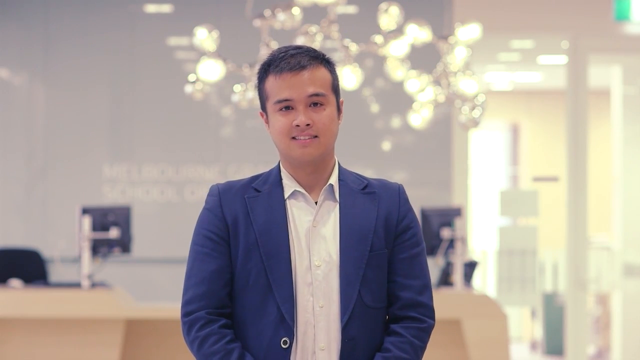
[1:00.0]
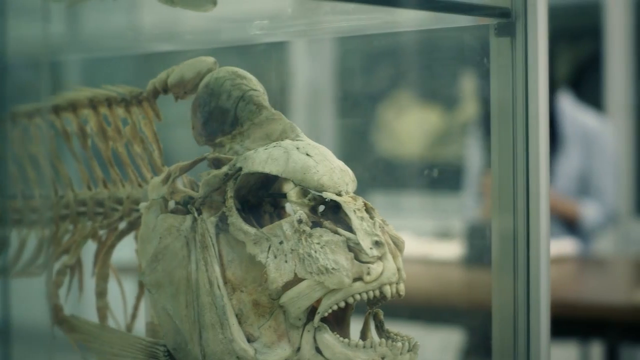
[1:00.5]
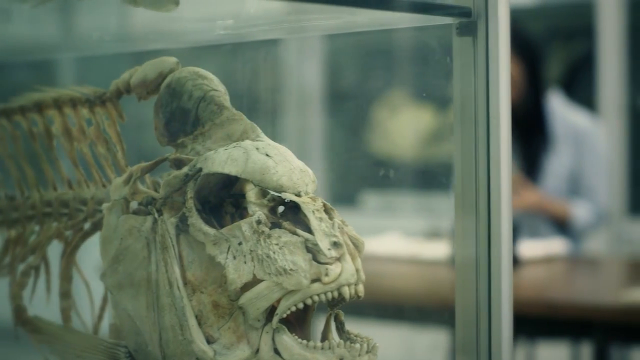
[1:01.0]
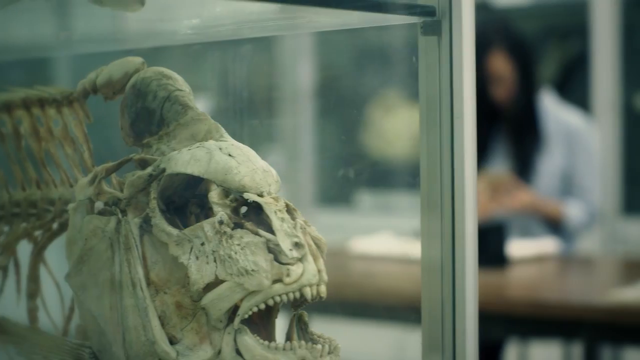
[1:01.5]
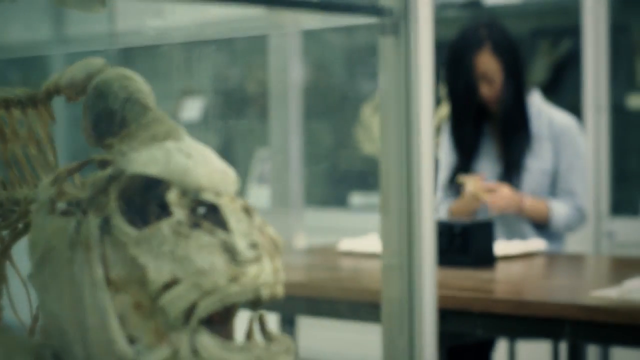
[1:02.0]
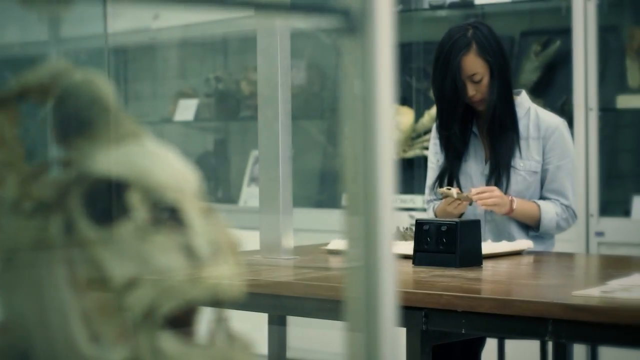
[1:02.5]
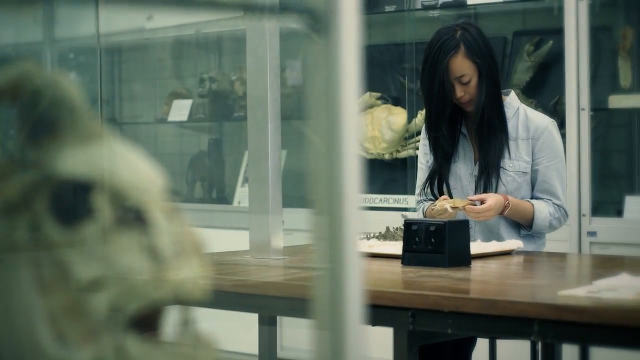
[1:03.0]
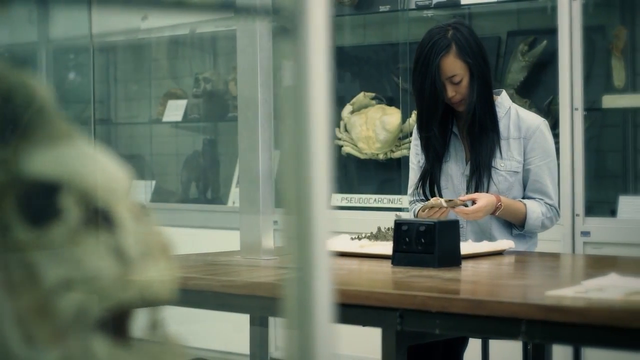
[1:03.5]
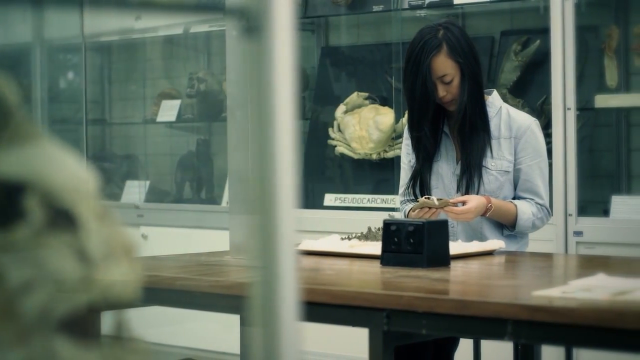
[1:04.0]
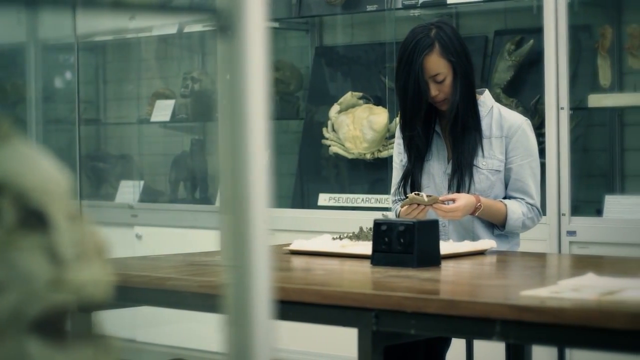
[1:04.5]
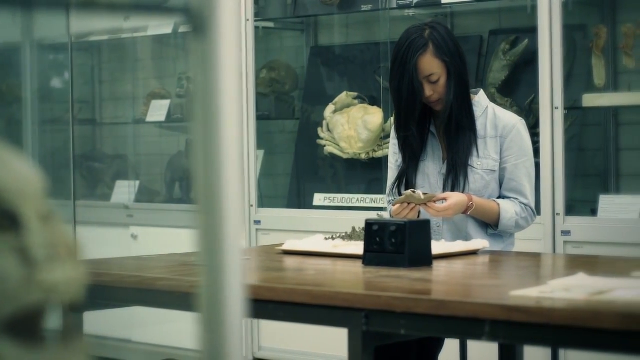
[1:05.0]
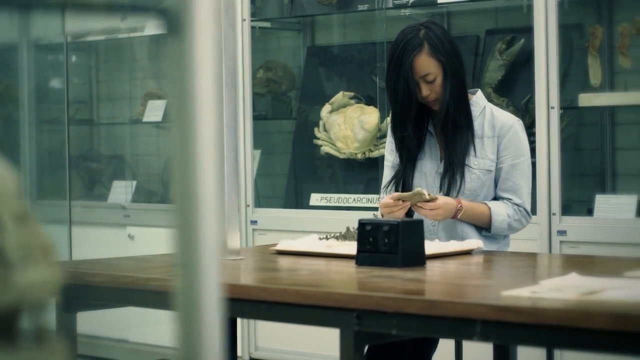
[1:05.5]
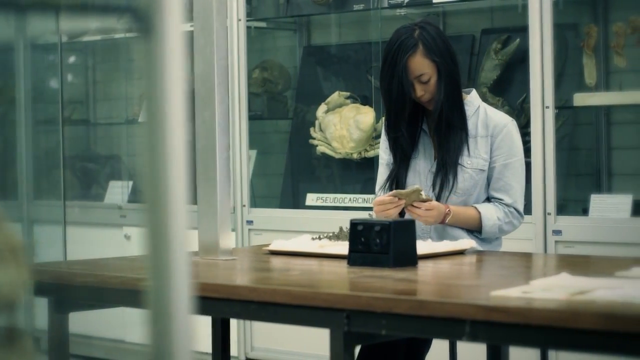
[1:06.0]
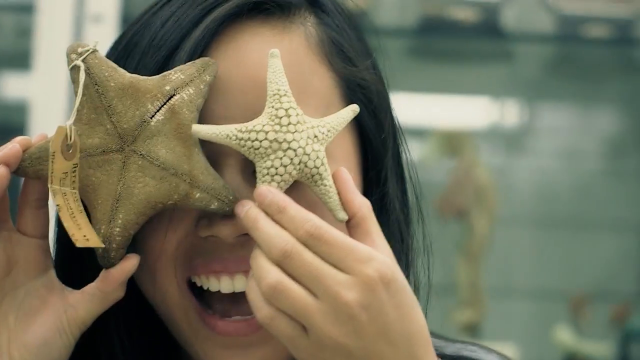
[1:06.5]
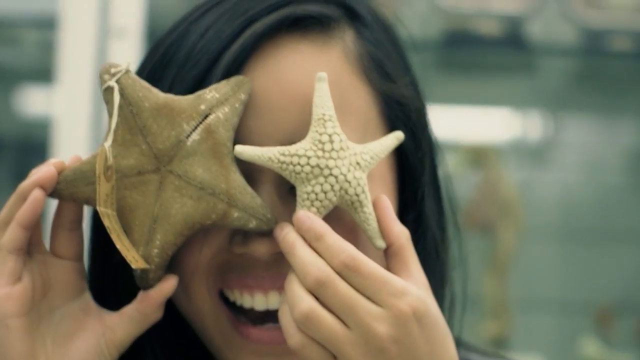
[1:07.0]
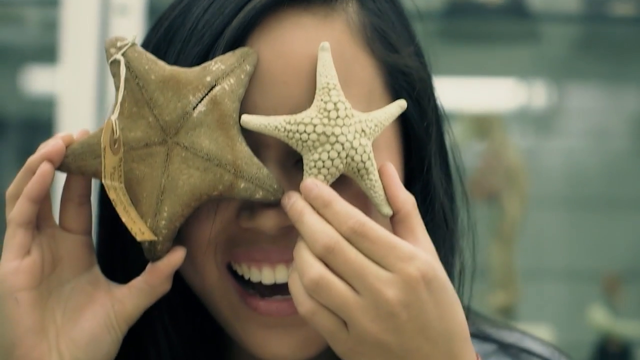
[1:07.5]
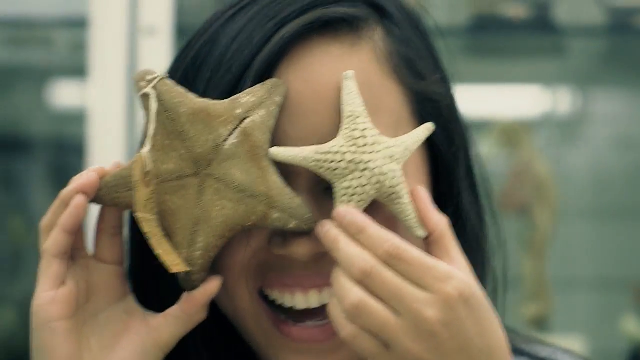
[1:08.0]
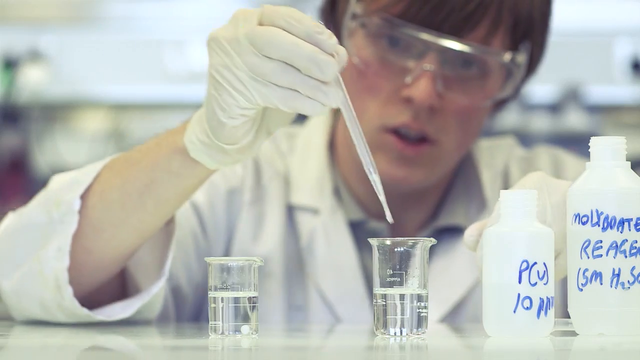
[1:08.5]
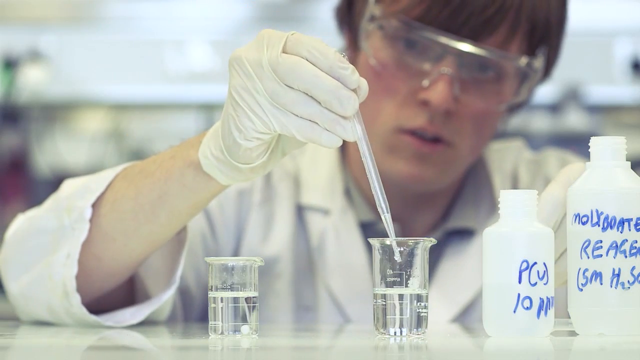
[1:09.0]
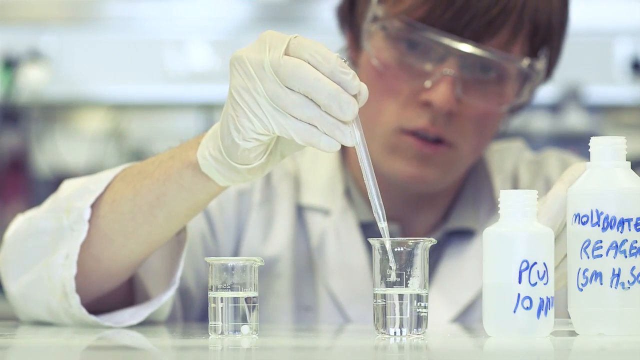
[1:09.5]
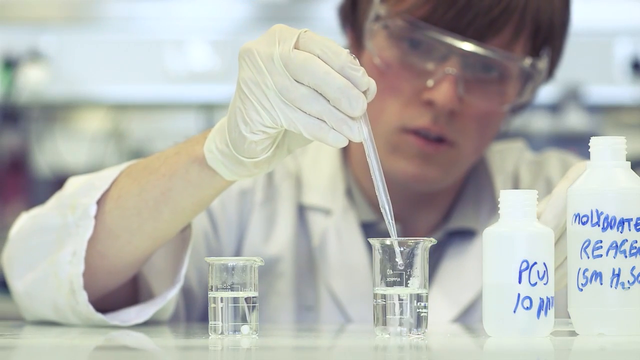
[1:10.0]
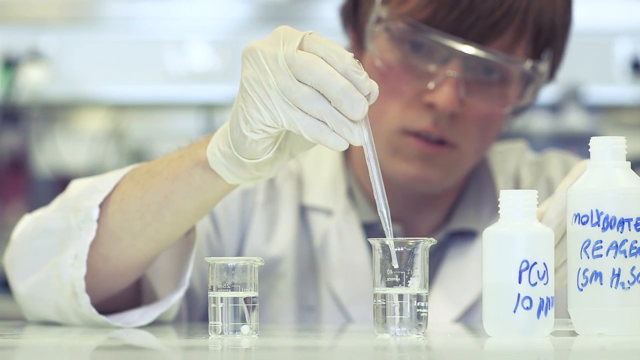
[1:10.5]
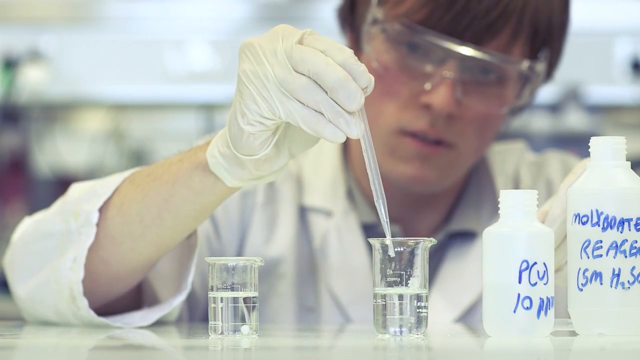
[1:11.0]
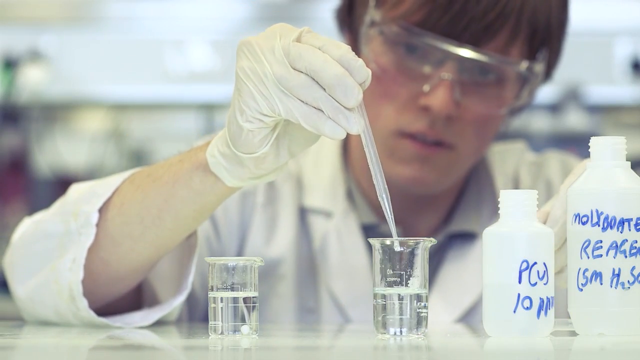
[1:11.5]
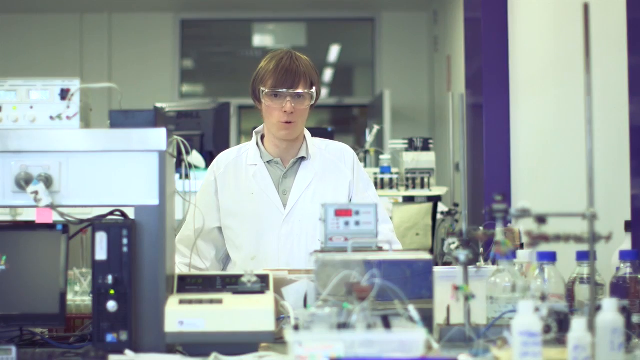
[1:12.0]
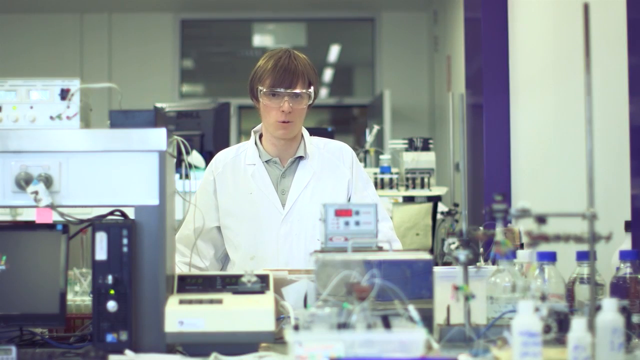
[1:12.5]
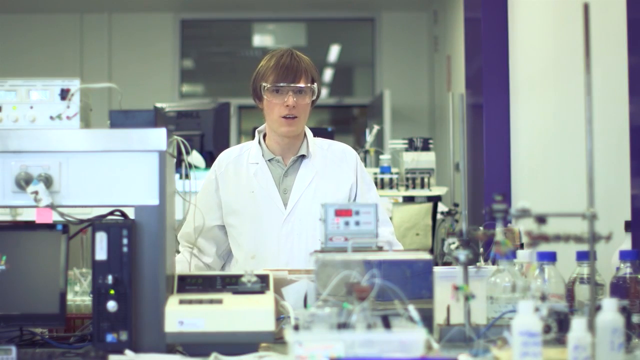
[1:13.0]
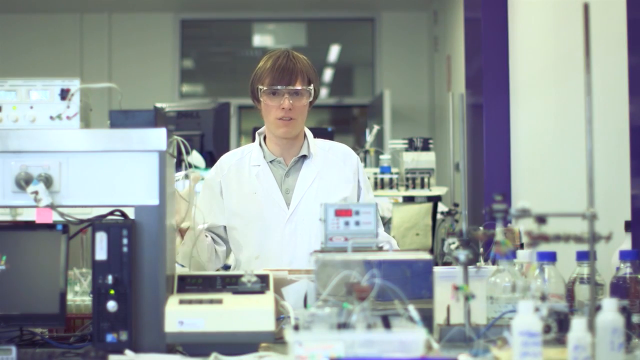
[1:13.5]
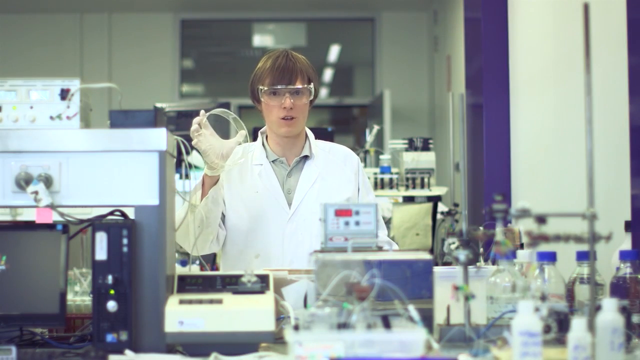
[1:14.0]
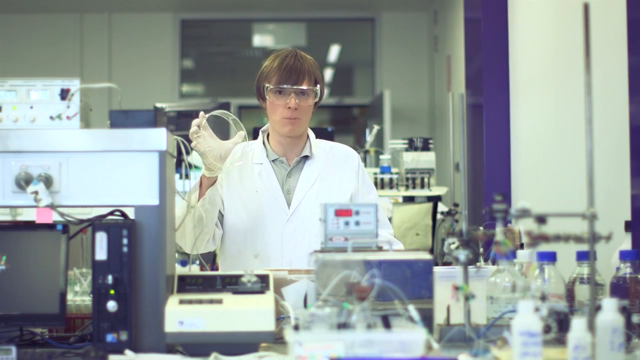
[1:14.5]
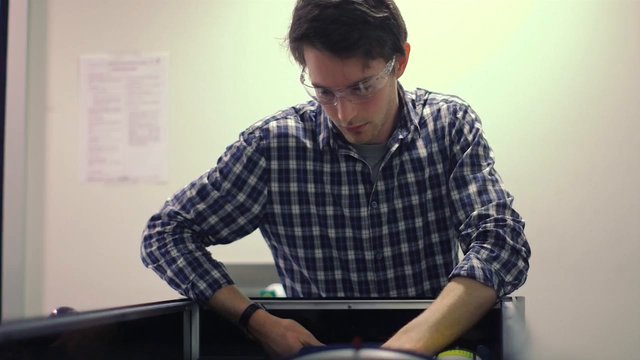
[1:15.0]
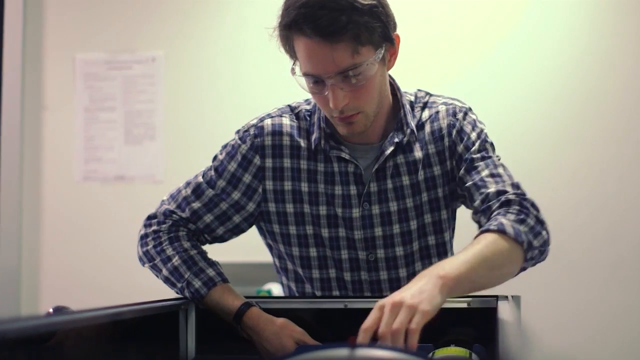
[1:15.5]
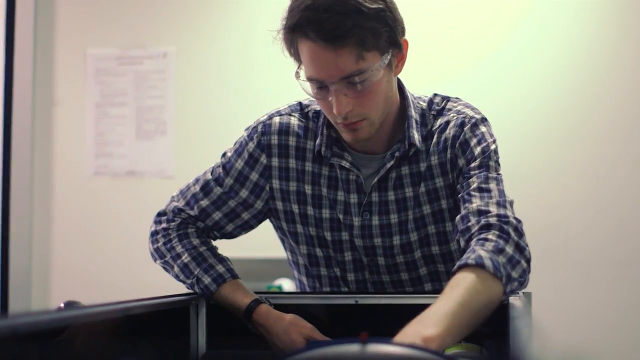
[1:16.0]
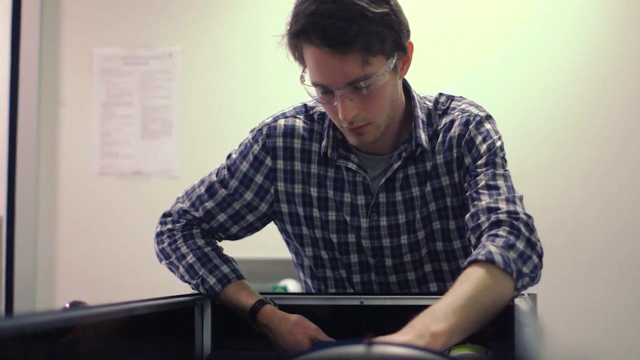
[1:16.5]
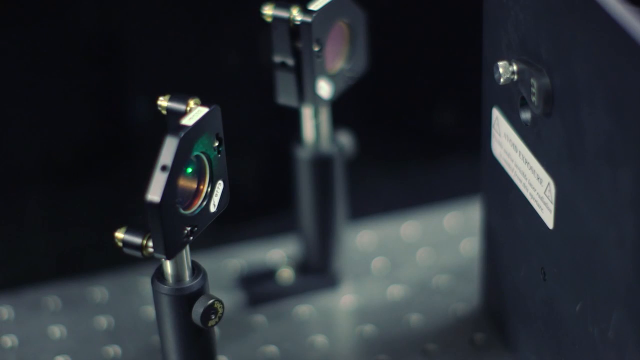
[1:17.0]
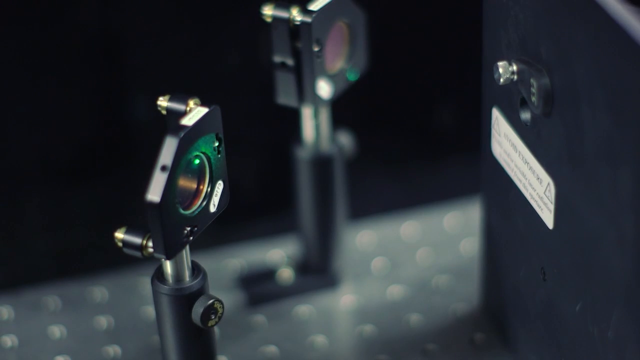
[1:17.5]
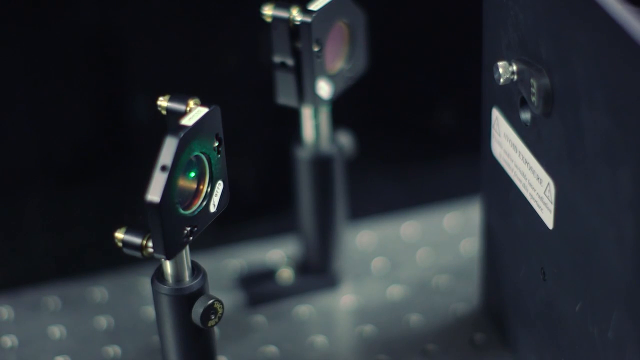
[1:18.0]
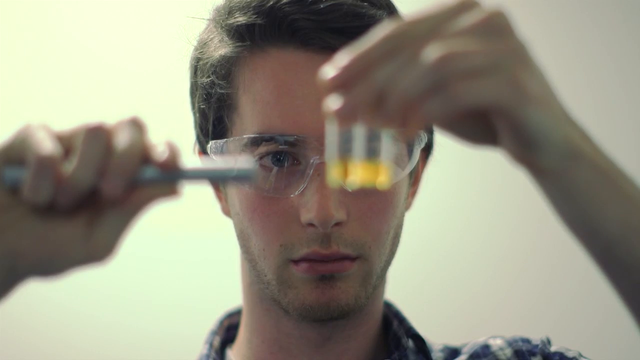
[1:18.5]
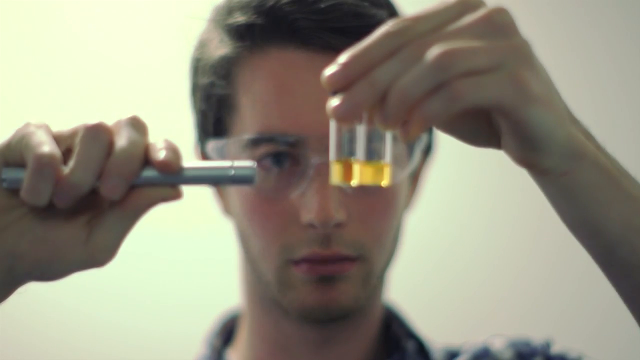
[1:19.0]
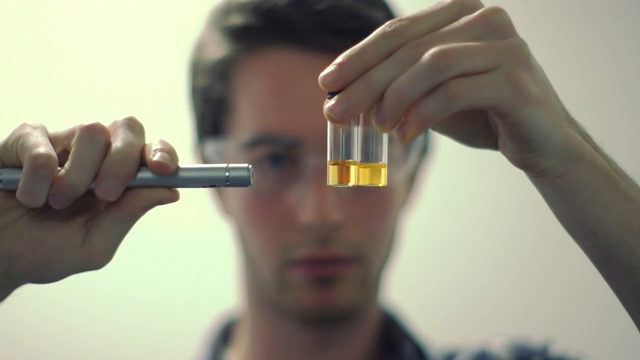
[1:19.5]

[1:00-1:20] A close-up shows a display case holding a large fish skeleton with sharp teeth and visible backbones, with a young woman in the background. In a close-up of her, she holds two starfish up to her eyes with her mouth open. Nicholas, the lab technician, has brown hair that is kind of long and reaches his ears; he speaks directly into the camera and holds up a large petri dish in his right hand. Another student, in a blue and white flannel shirt and clear protective goggles, is doing something with lasers. There are two things that kind of look like black lenses on rods, and he uses a laser to look through a small cup of yellow liquid.